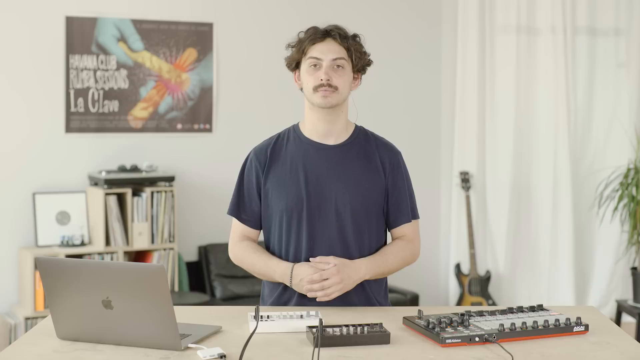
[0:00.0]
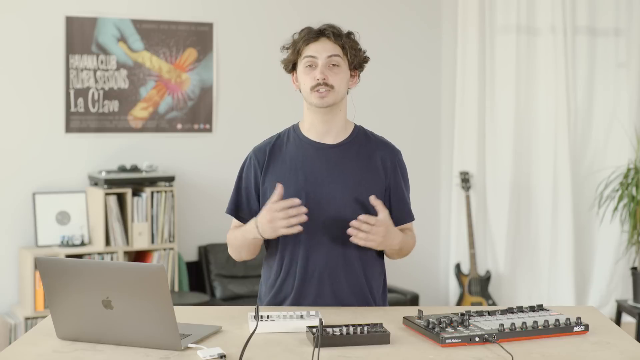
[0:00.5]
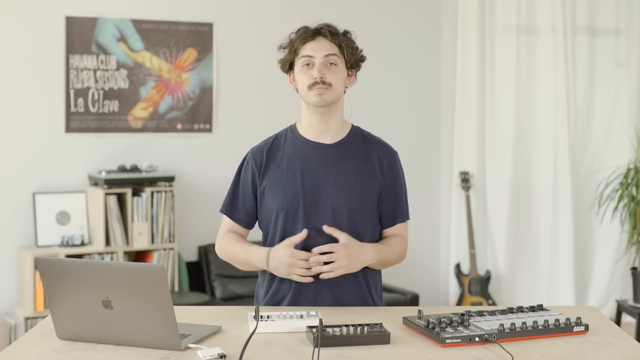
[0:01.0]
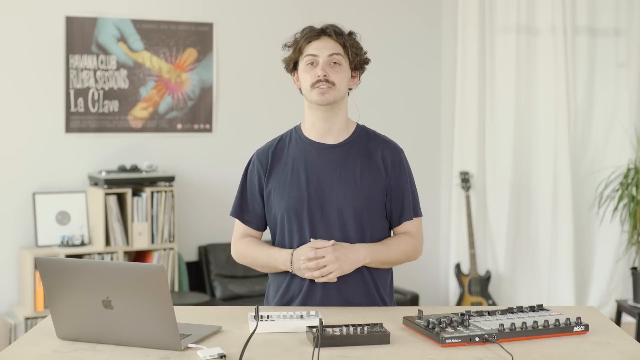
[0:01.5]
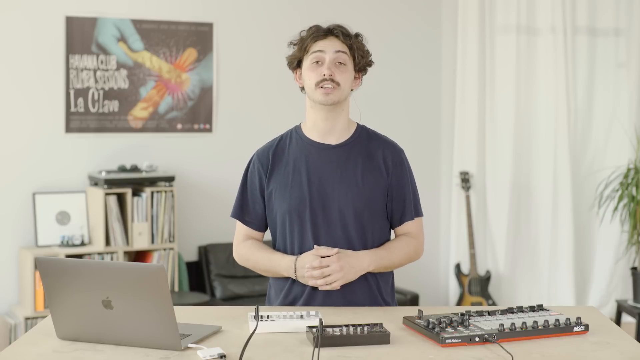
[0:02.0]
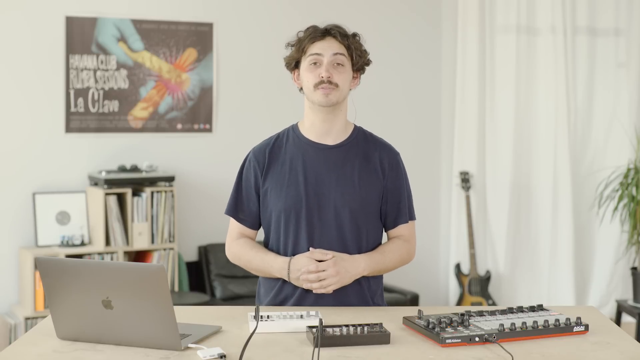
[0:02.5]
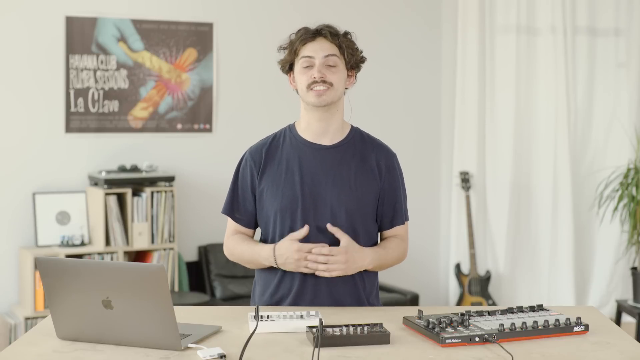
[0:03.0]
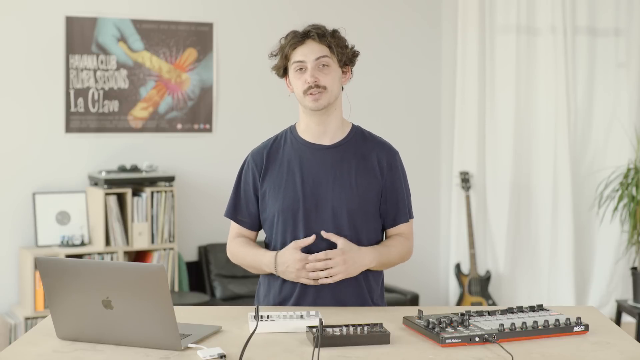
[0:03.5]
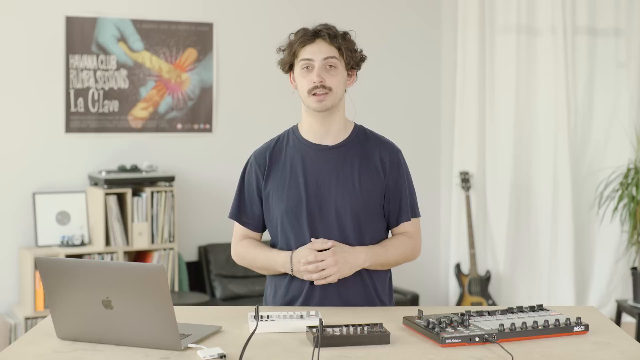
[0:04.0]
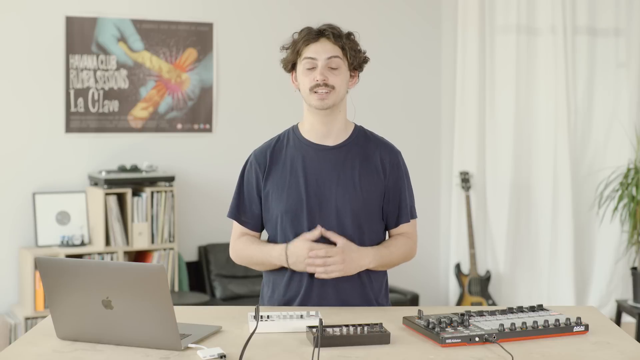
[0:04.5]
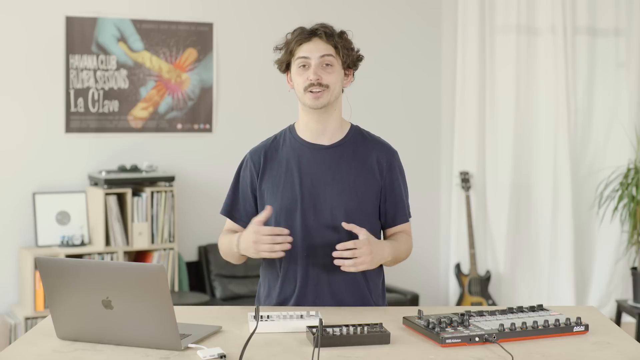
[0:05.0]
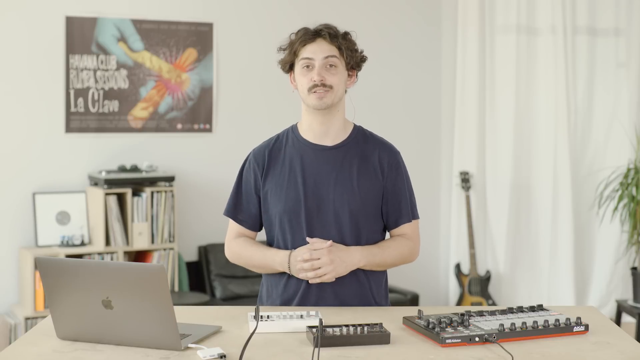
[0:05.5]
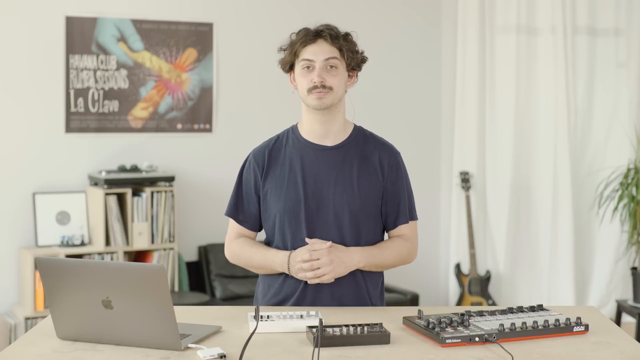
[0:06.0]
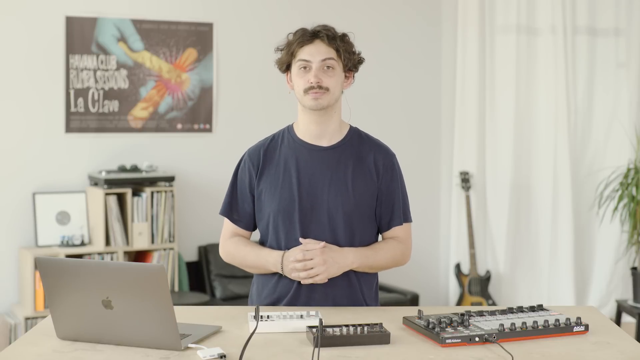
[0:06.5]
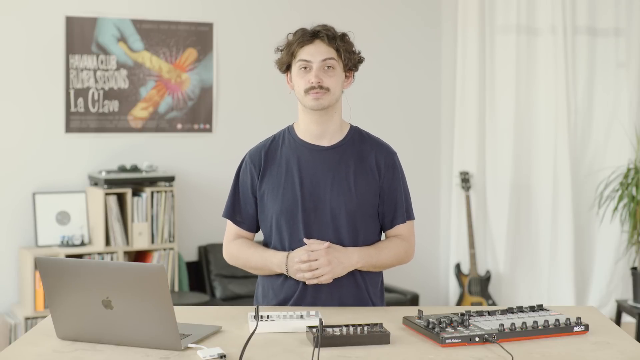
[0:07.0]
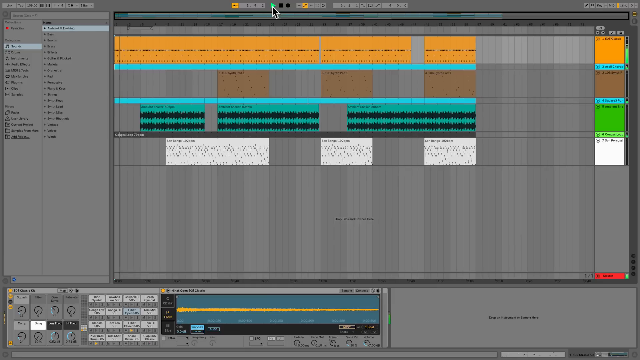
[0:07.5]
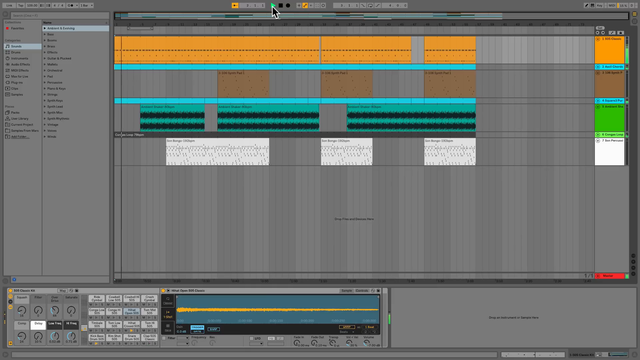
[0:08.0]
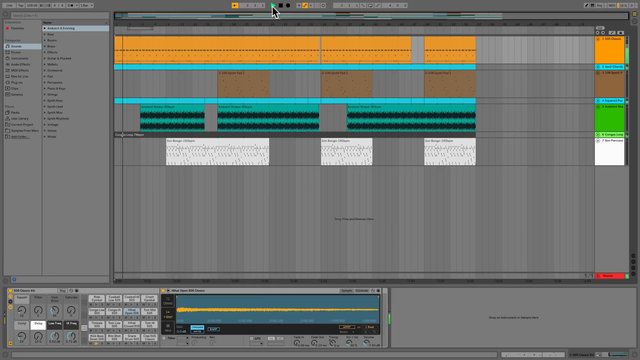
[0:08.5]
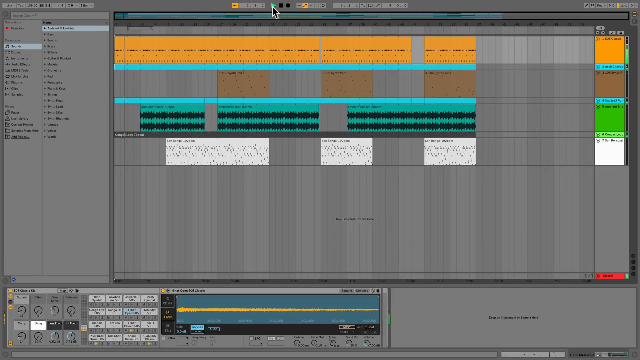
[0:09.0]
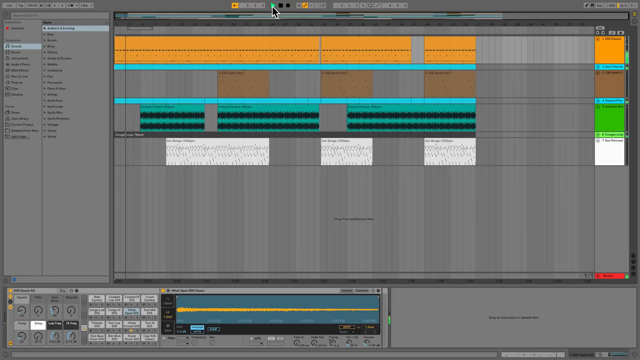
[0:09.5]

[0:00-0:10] A man stands in the center of a room with his hands folded across his waist area. He wears a black shirt, has a mustache, and his hair is a little longer right above his ears and a little wavy and curly. The room has white walls and white curtains, and an electric guitar is against a white curtain. Behind him on the wall is a very colorful picture that includes hands with a blue tint. The man talks at the camera, speaking with his hands. At times the view changes to a screen showing different colors that look like bars and rhythms or something in a graph-type setup.